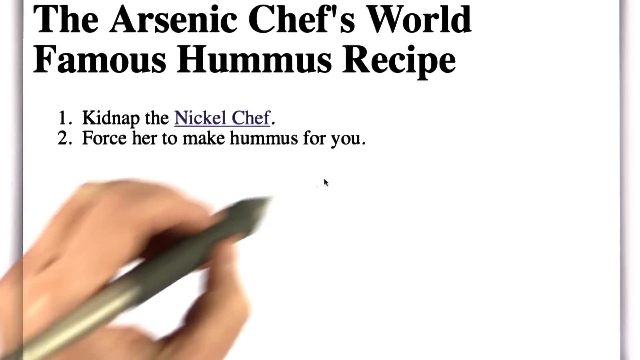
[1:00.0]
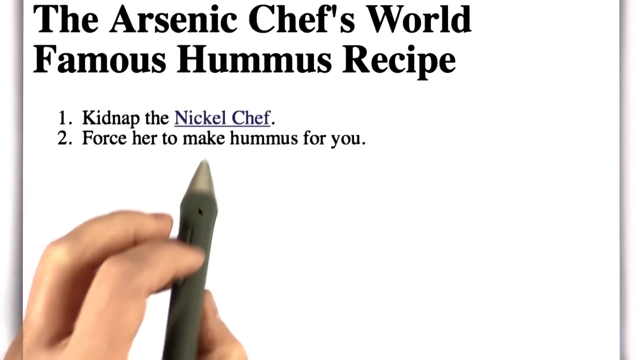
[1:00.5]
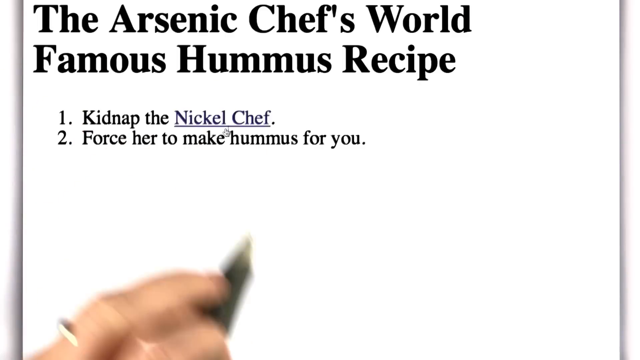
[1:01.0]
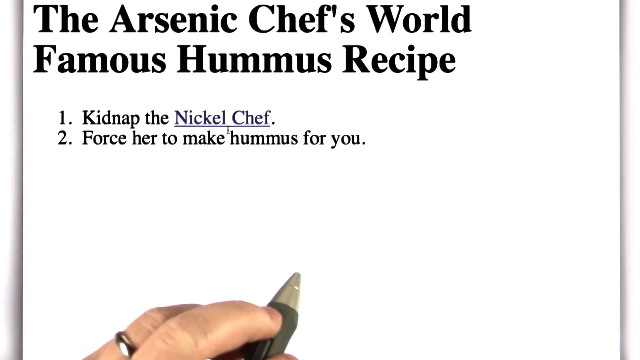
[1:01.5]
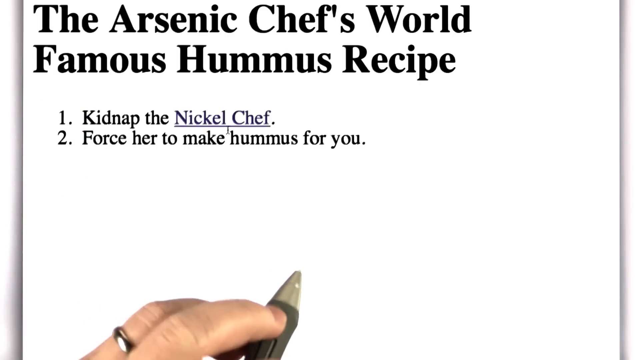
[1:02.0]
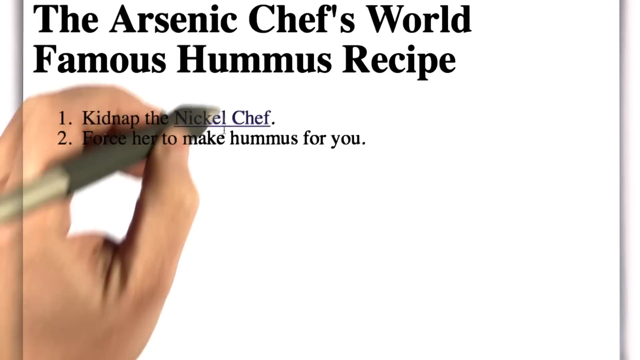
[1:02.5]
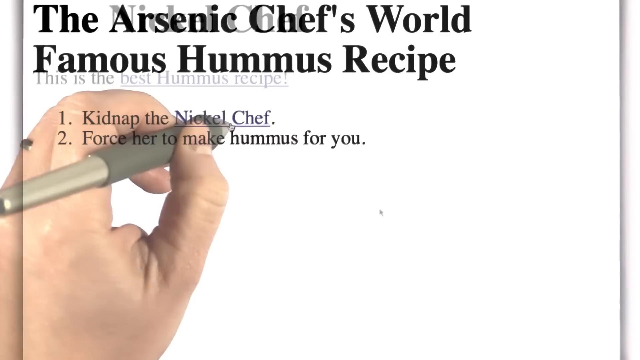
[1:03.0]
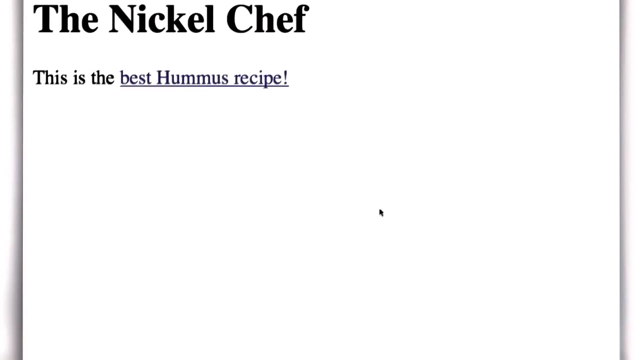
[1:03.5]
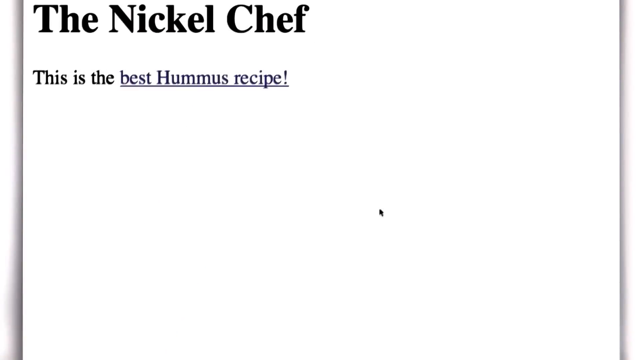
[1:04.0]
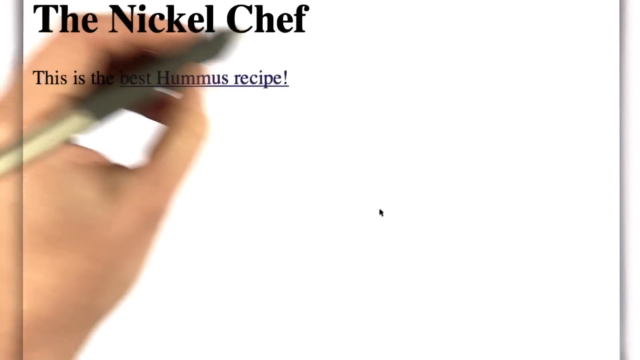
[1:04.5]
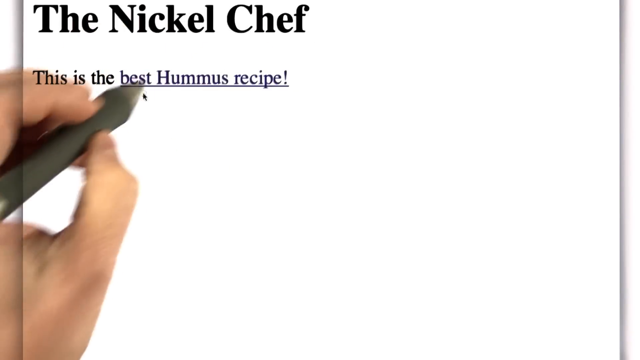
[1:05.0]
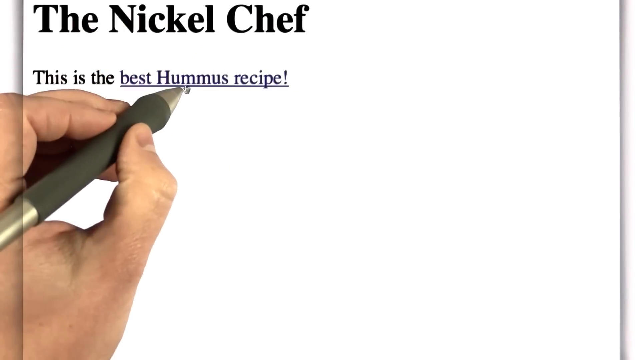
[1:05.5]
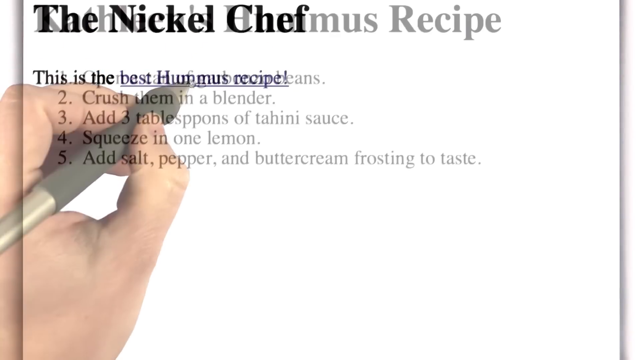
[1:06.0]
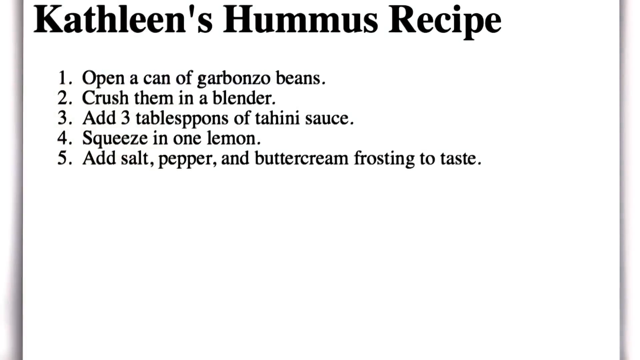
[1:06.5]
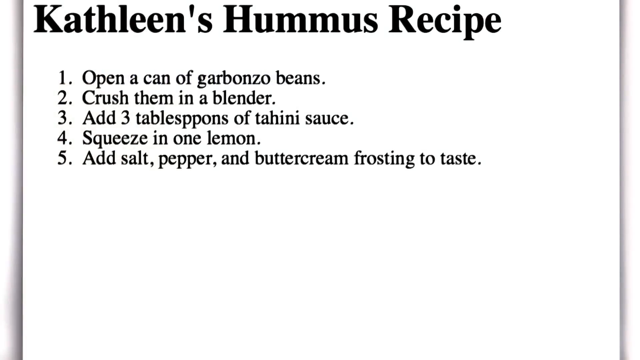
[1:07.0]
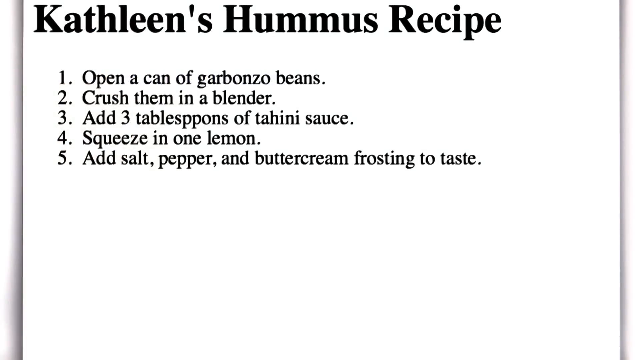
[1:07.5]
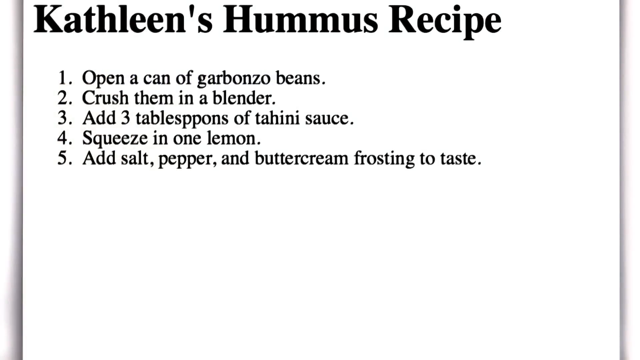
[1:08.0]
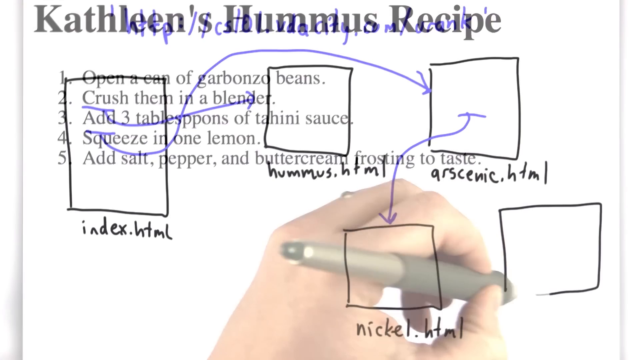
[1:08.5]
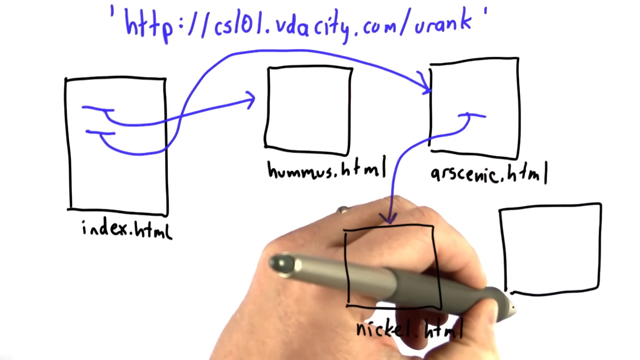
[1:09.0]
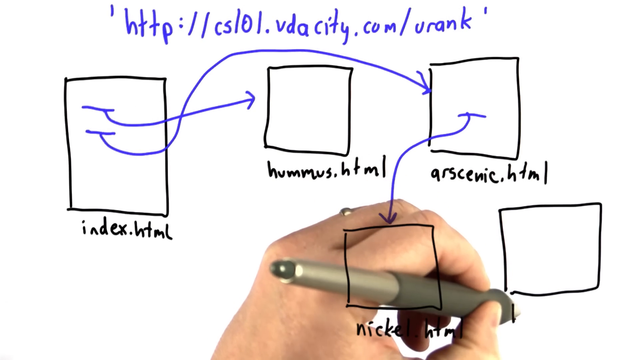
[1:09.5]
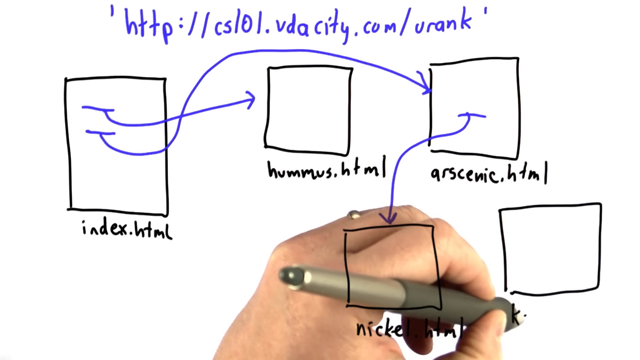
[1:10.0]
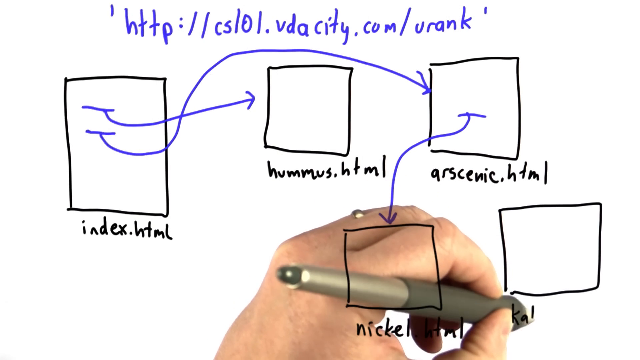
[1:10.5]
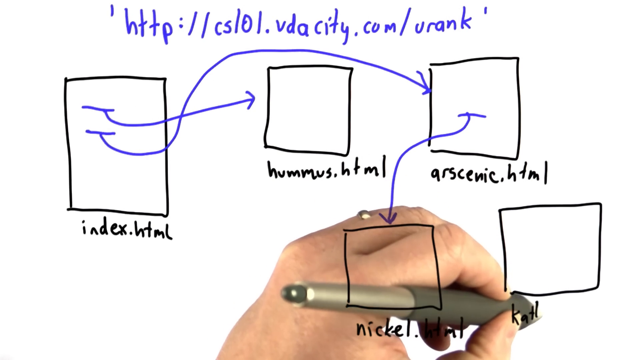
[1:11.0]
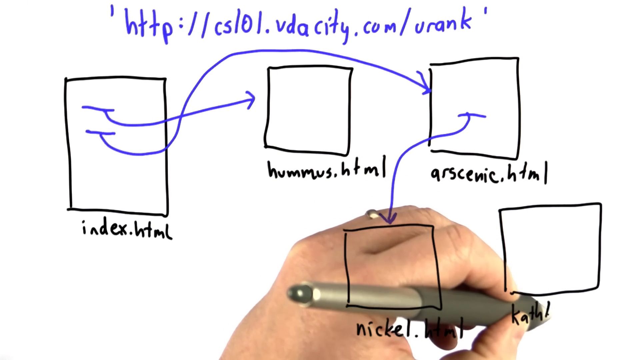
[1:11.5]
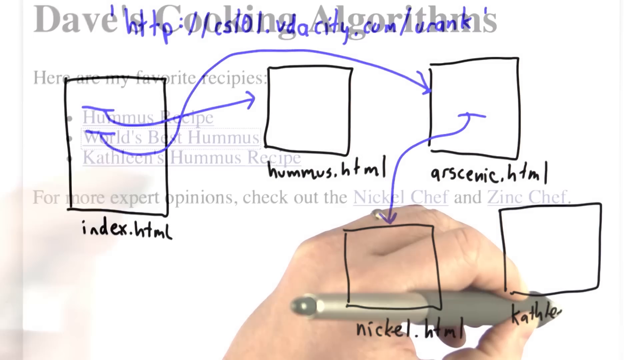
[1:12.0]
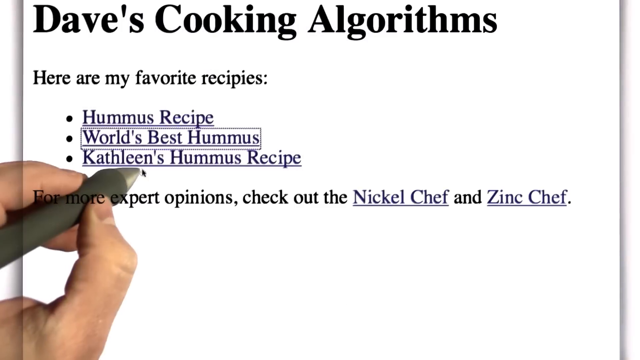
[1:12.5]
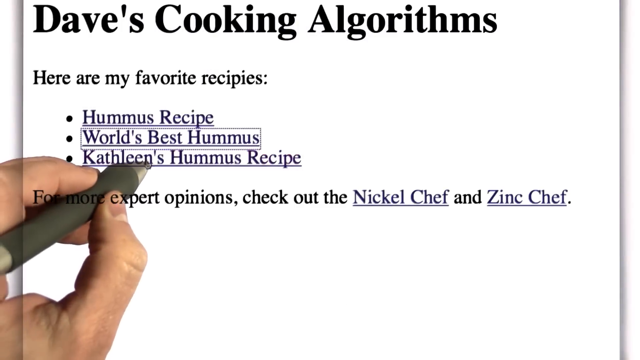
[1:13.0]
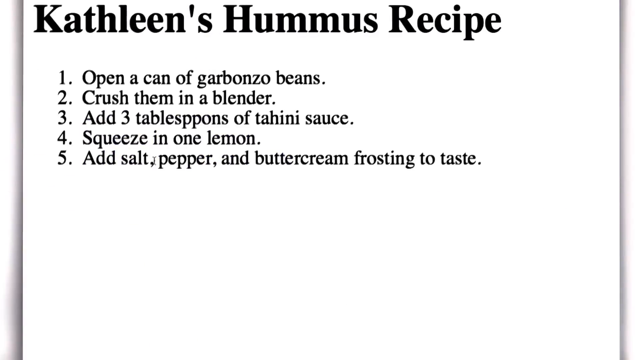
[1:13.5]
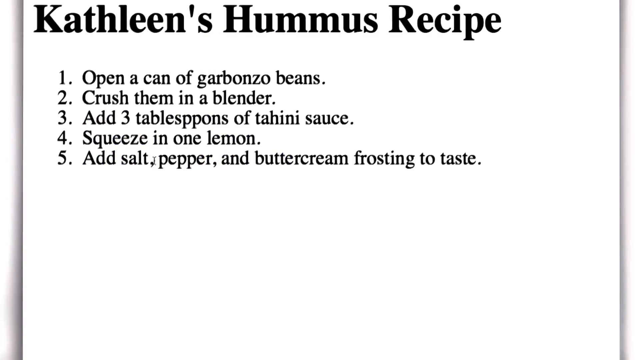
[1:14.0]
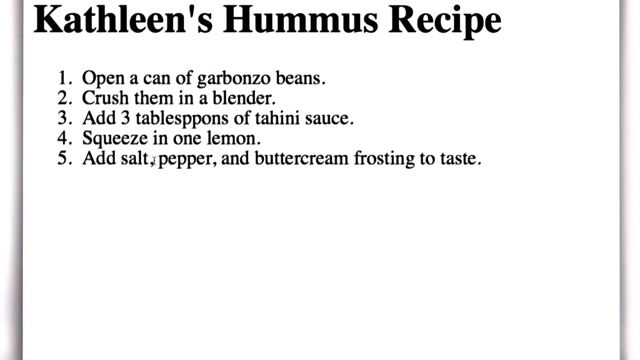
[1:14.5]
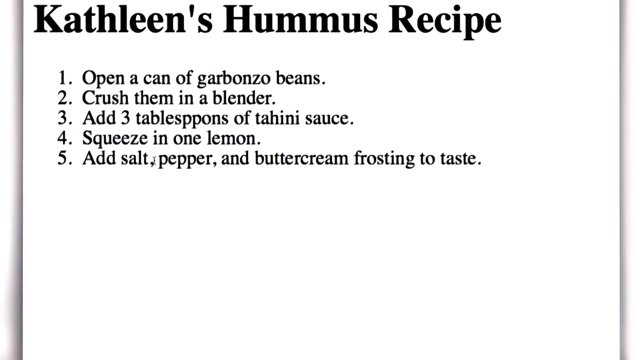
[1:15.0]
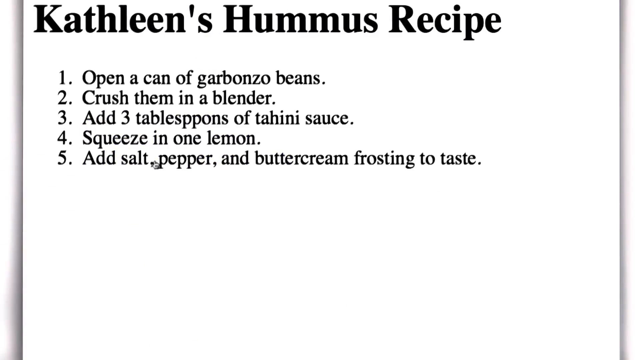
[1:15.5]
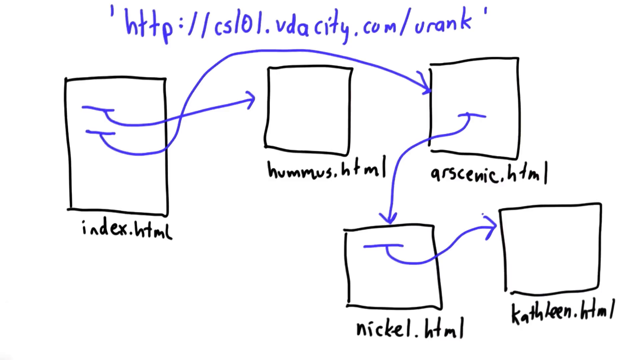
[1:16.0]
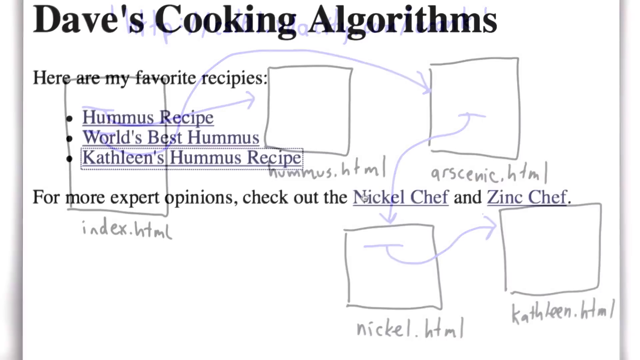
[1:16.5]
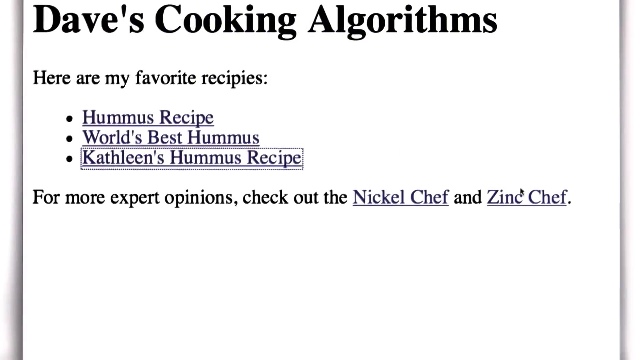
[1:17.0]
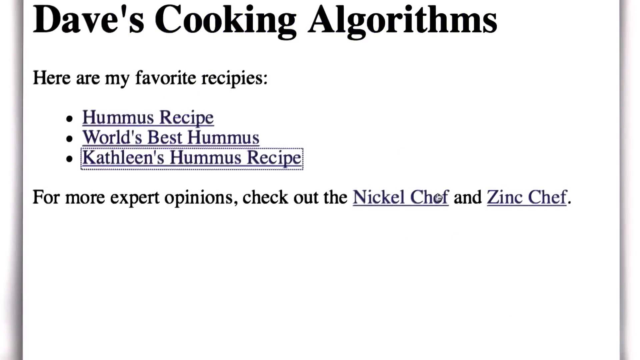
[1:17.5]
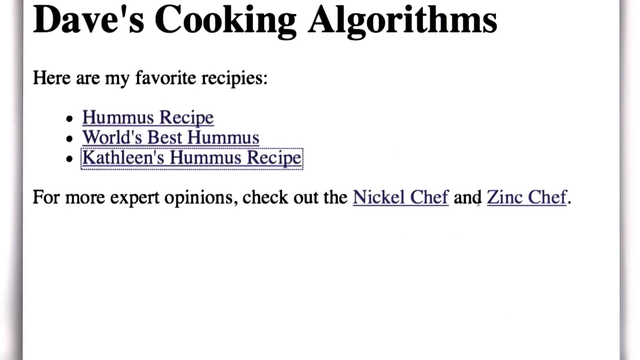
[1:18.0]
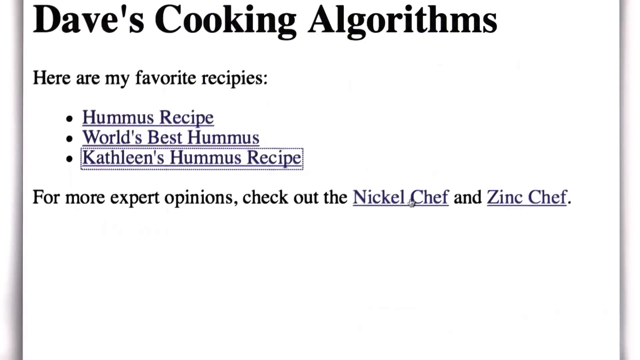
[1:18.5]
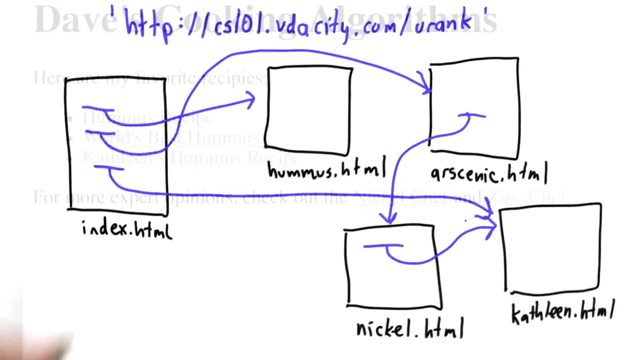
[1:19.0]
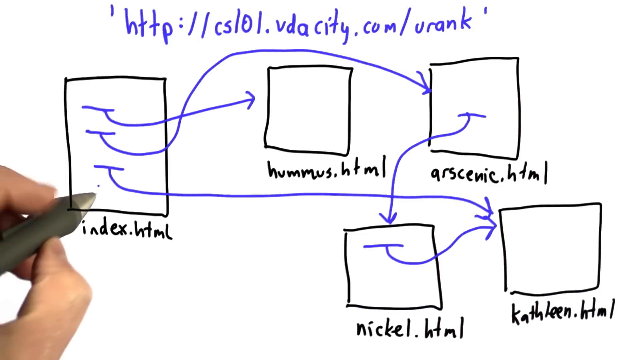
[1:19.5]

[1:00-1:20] The person works through famous ham recipes. One written recipe for a world famous ham lists point number one as "kidnap the nickel chef force her to make hams for you". Another, a Caitlin ham recipe, lists: point number one, open a can of cabbage or beans; point number two, crush them in a blender; point number three, add three tablespoons of tahina sauce; point number four, squeeze in one lemon; point number five, add salt, pepper and buttercream frosting for taste. Meanwhile the graph is being written on the other side.